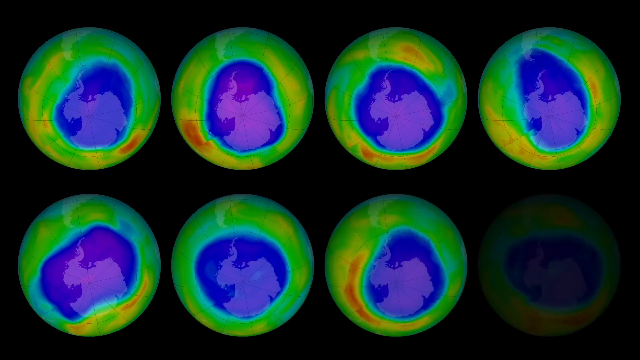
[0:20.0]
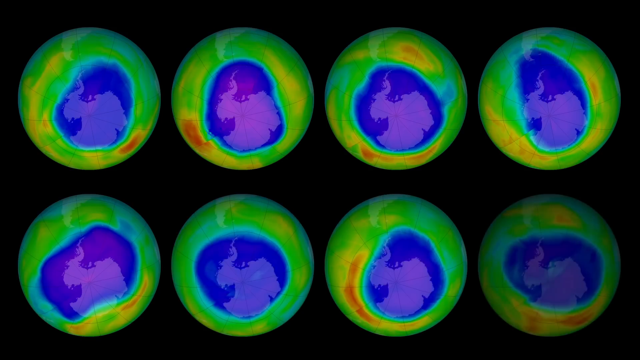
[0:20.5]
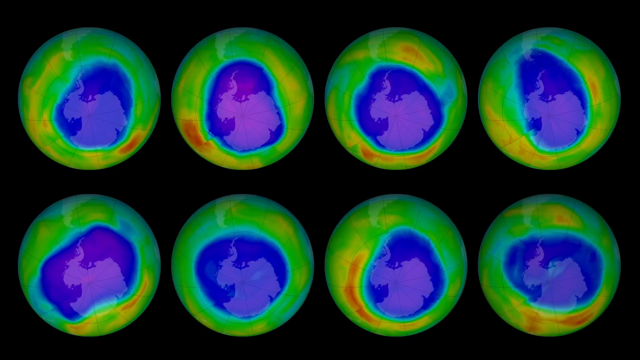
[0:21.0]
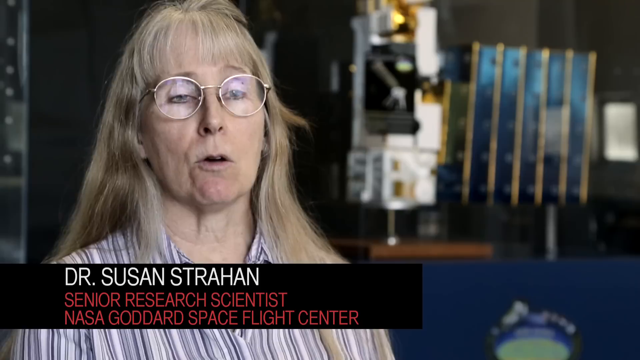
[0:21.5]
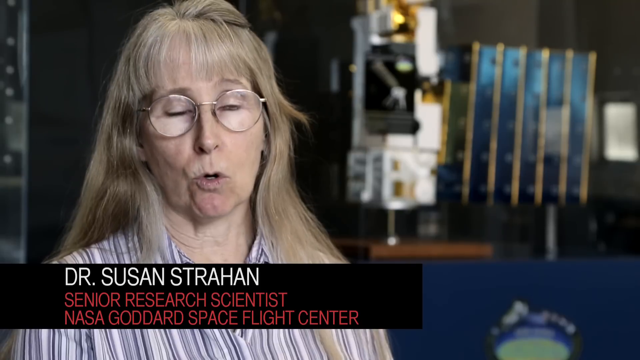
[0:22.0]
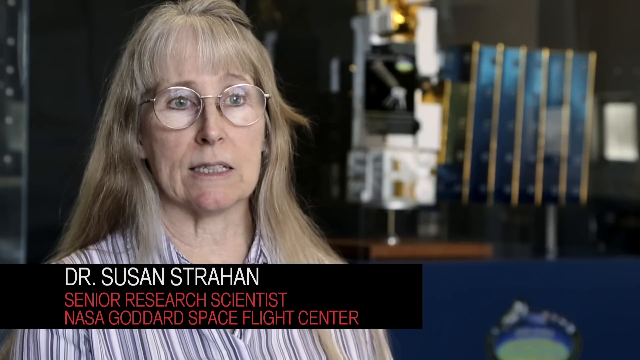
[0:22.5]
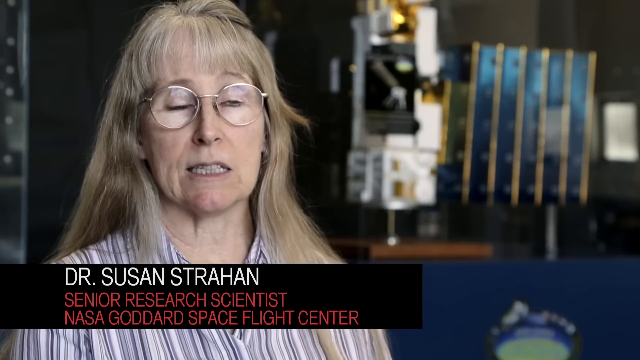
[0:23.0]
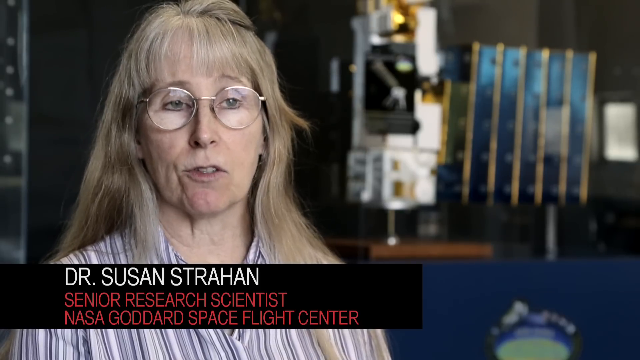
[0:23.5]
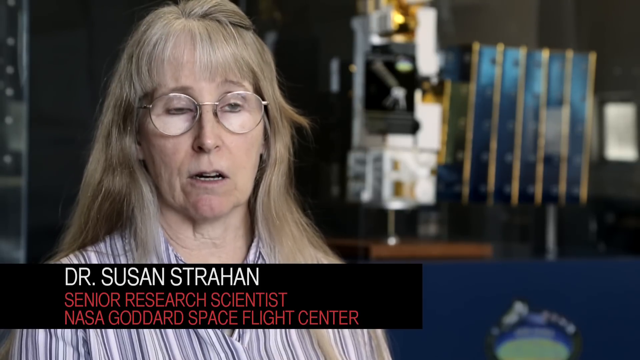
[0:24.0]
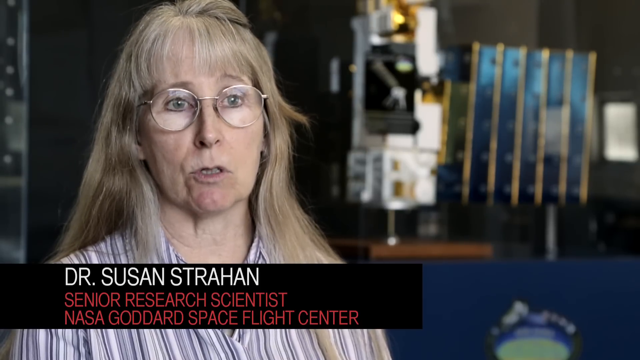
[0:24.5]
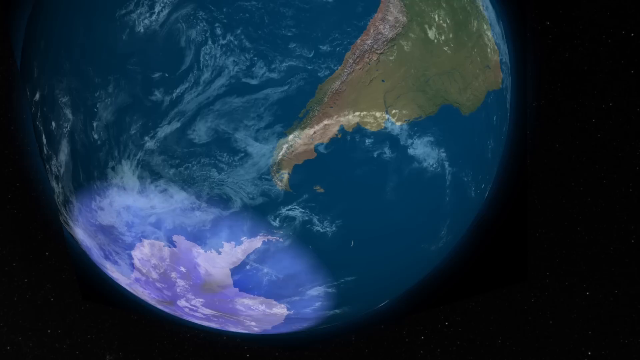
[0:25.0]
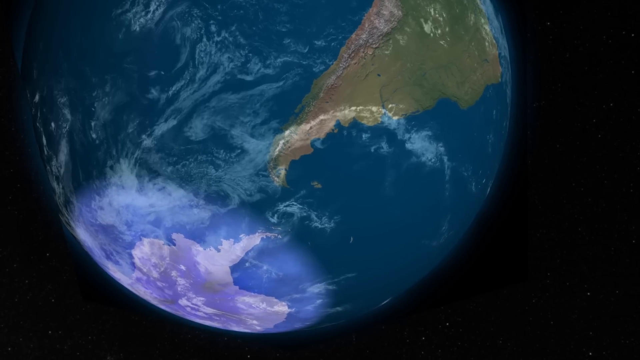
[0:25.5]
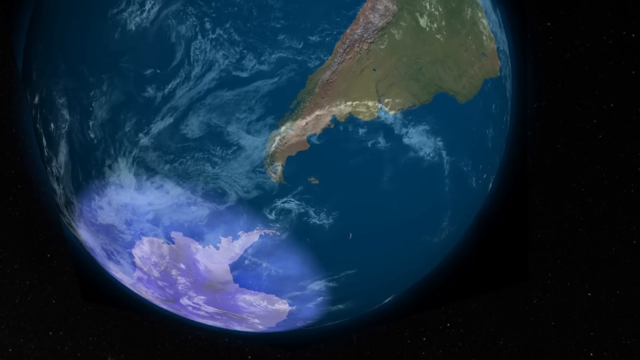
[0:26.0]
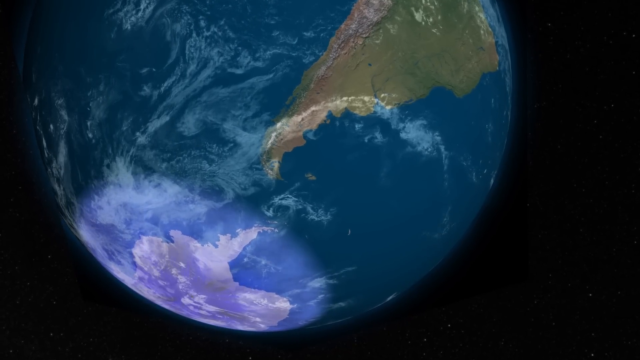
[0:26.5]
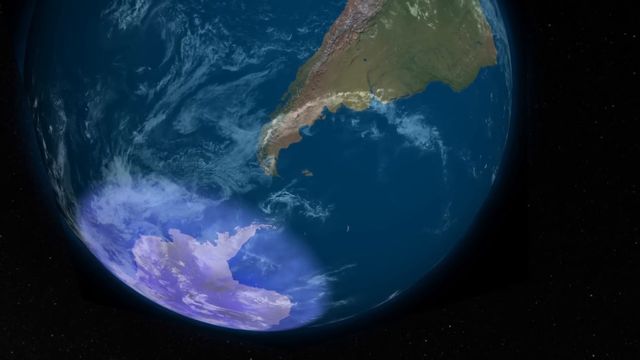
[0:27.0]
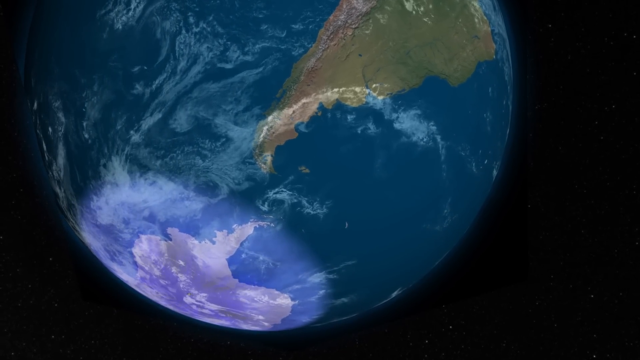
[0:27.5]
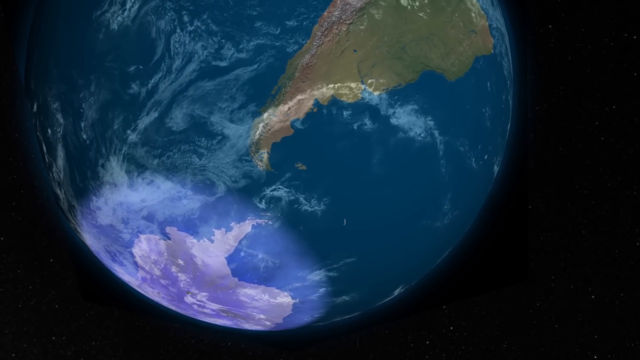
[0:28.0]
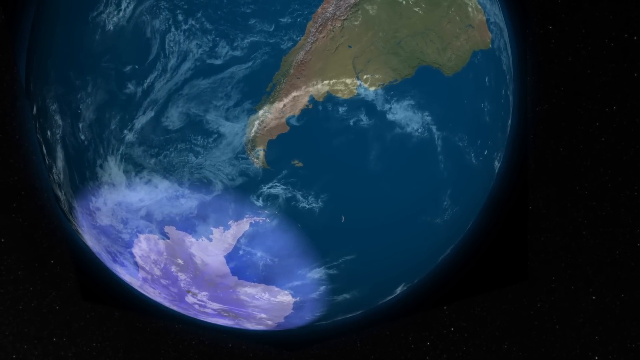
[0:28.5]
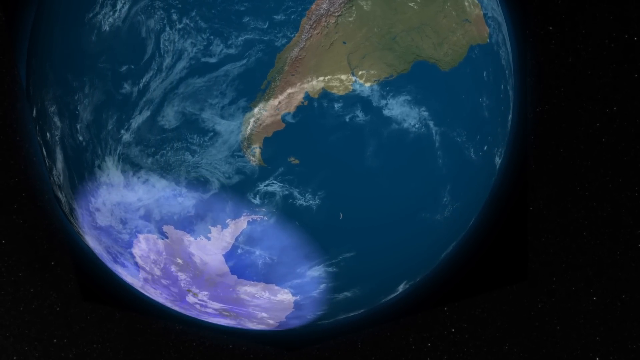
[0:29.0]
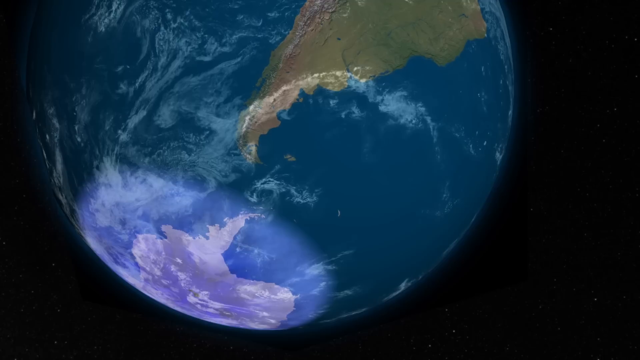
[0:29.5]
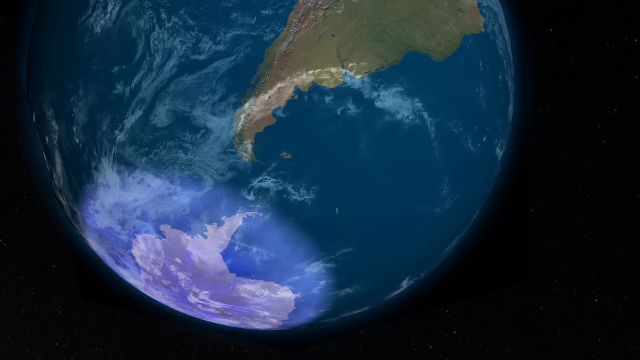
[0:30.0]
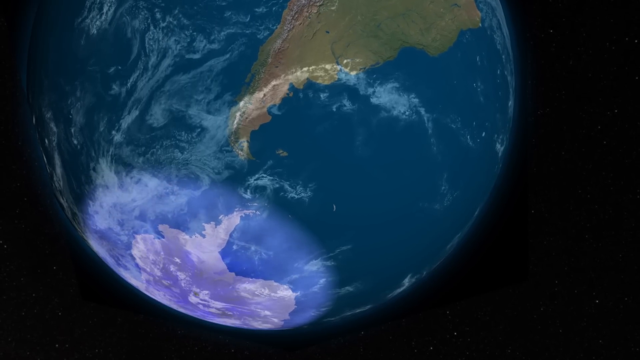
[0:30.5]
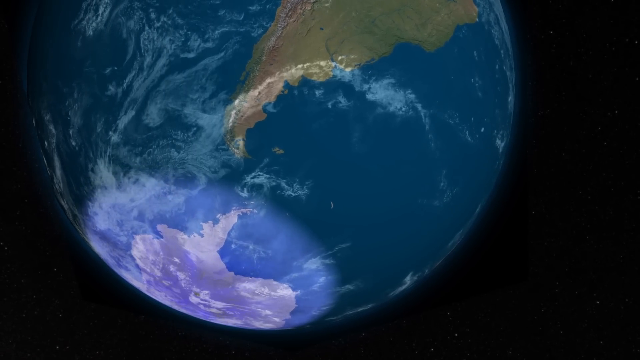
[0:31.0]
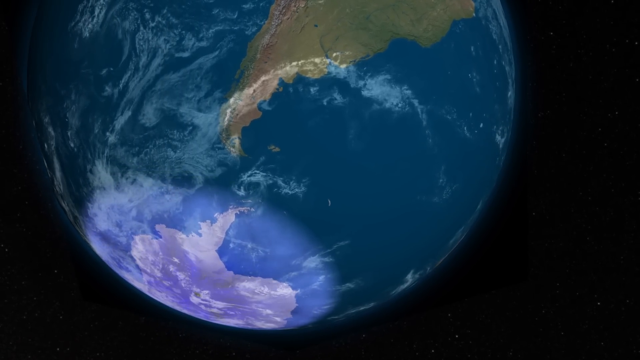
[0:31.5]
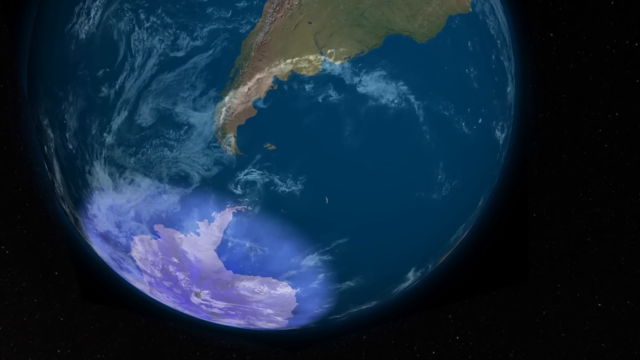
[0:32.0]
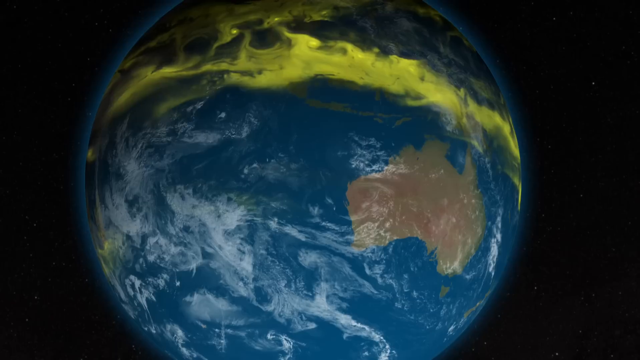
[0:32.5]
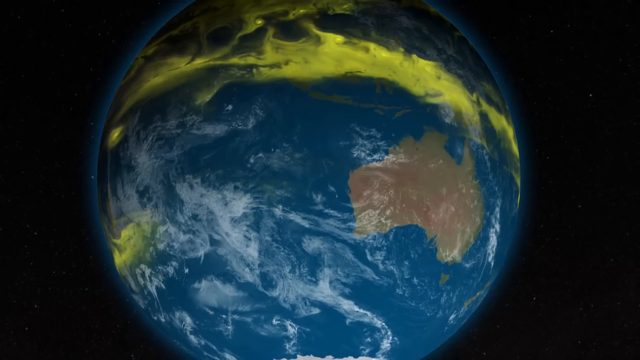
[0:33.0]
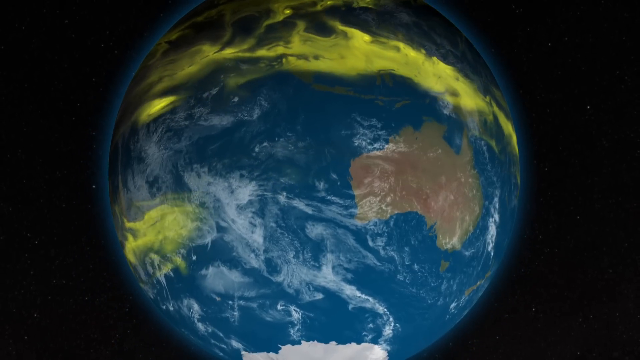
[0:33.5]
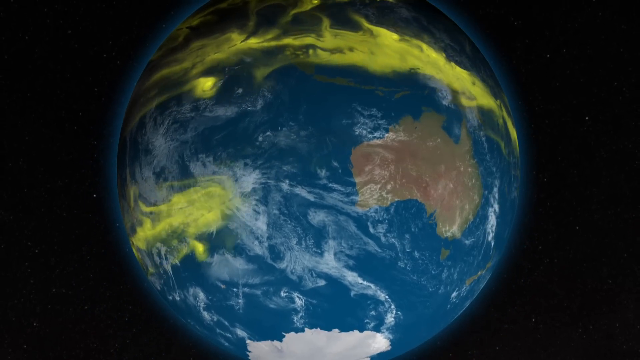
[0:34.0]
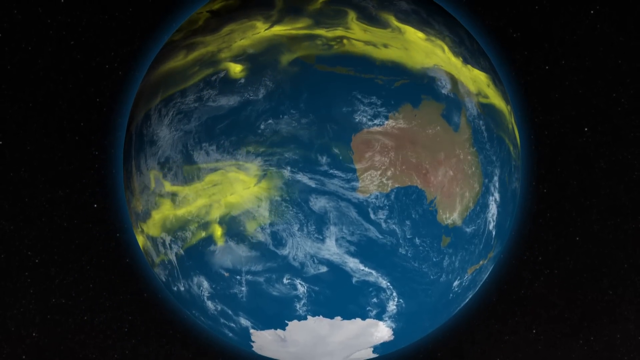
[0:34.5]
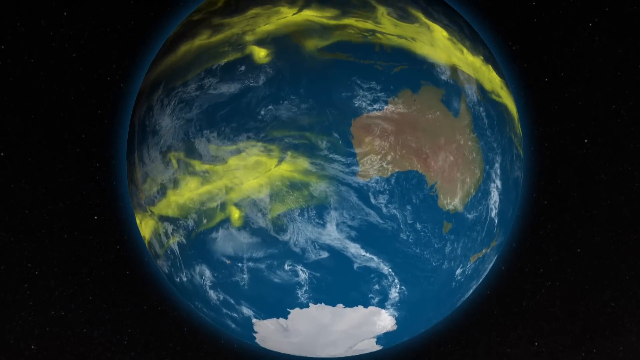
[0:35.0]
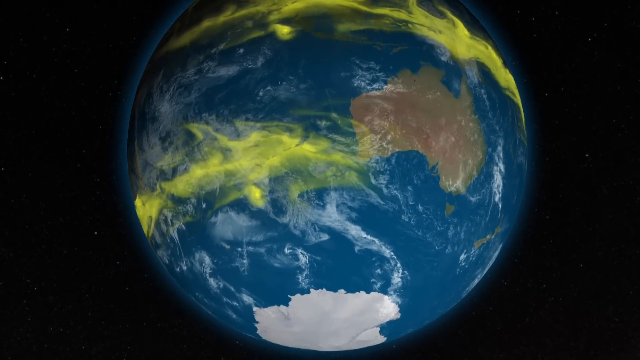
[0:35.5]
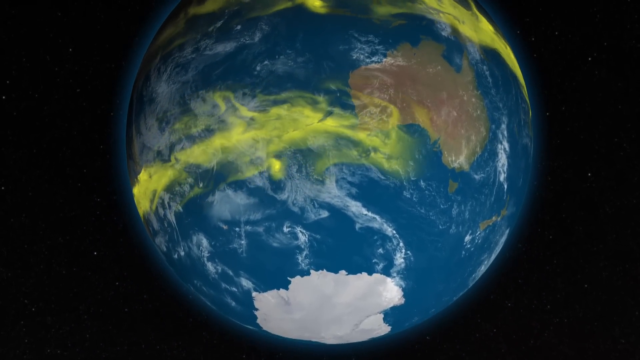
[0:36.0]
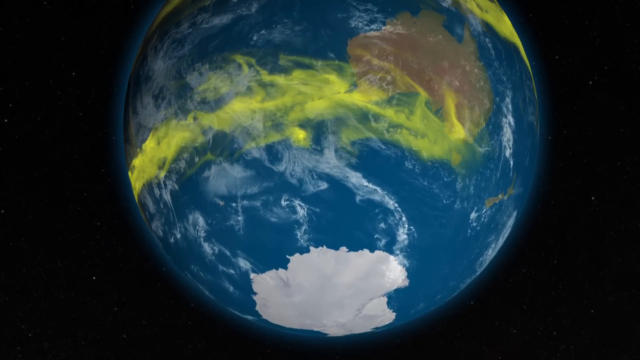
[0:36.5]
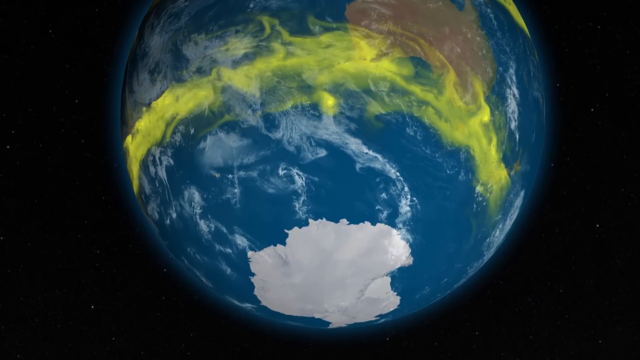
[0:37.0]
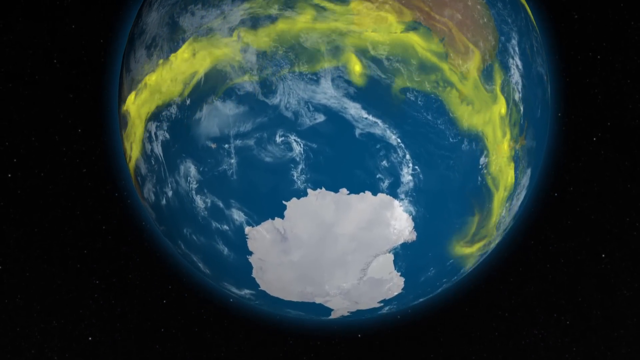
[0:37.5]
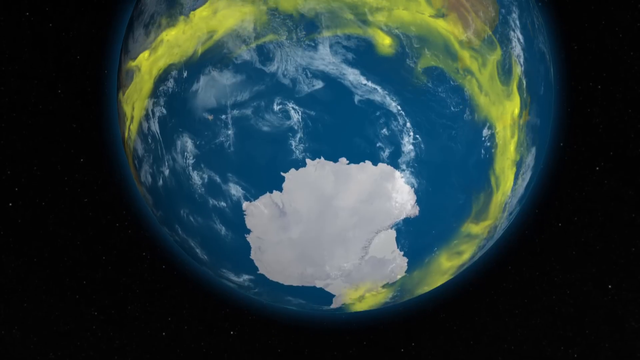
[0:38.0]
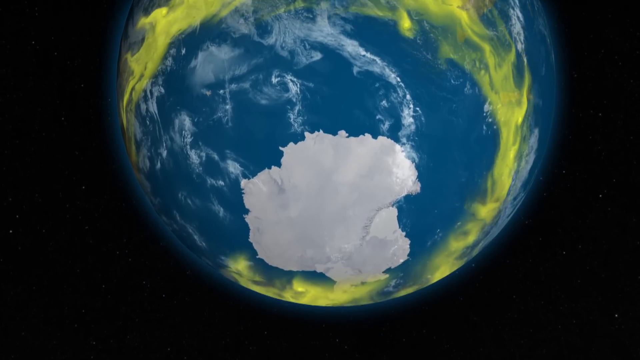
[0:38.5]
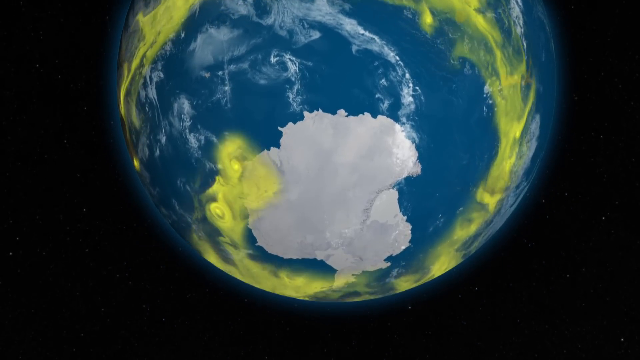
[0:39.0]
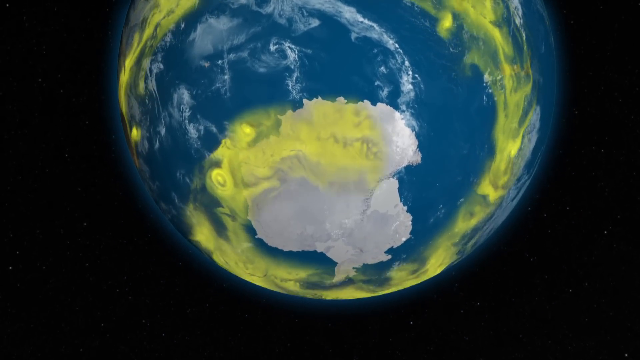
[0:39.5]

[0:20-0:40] Eight circular globes sit on a black background. They all have the same colors: mostly green with some blue in the center, some pink-purple in the center, and some yellow and orange surrounding it. The scene transitions to a woman with long blonde hair and glasses. A black box with white and red text reads "Dr. Susan Strahan, Senior Research Scientist, NASA Goddard Space Flight Center." She talks to the camera, slowly enunciating her words. Then Earth appears up close in blue and white, with some purple, blue and white, seemingly rotating a bit. Another angle shows a kind of yellow going across Earth and spinning around it, and the camera moves down to show the bottom, with the yellow seemingly swirling around until it covers most of the bottom.